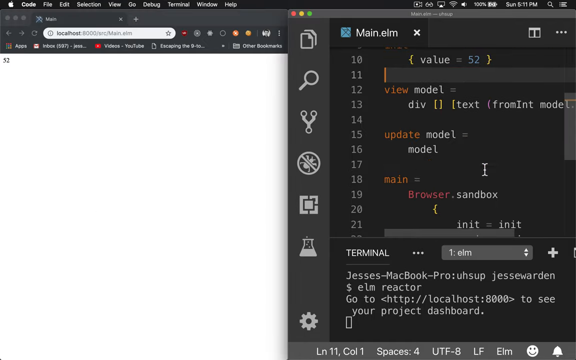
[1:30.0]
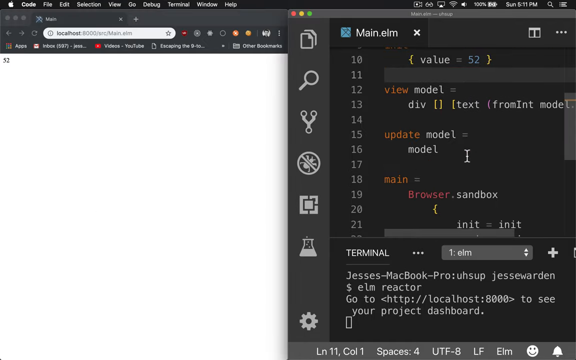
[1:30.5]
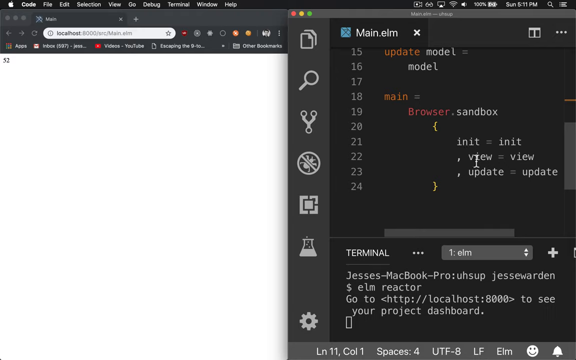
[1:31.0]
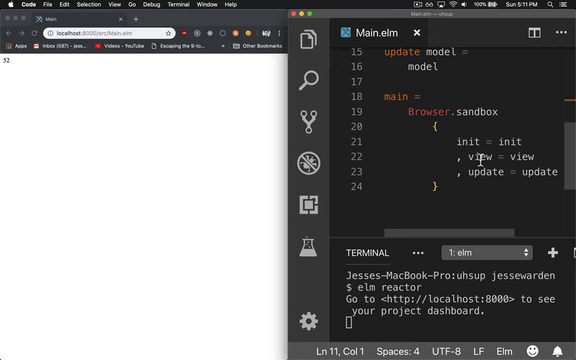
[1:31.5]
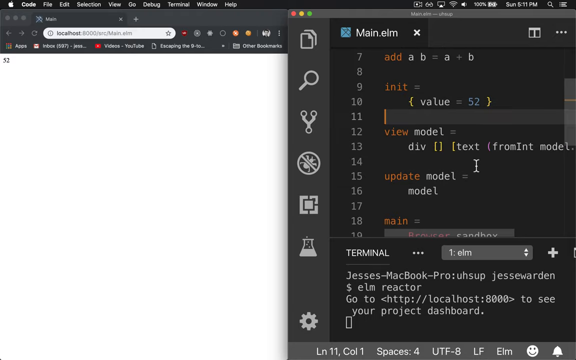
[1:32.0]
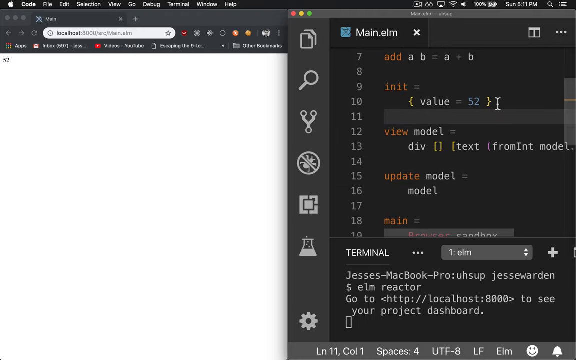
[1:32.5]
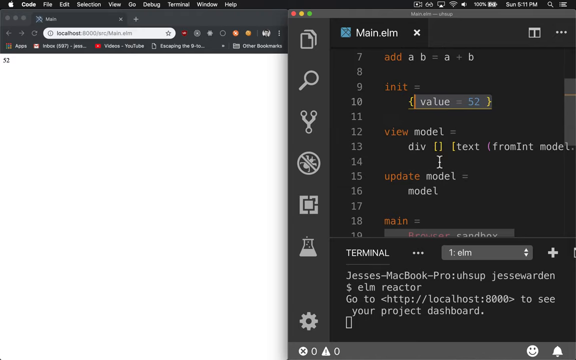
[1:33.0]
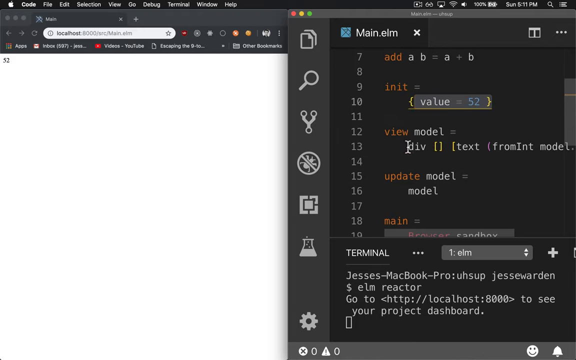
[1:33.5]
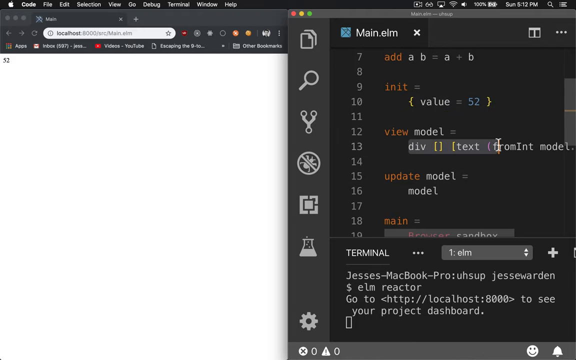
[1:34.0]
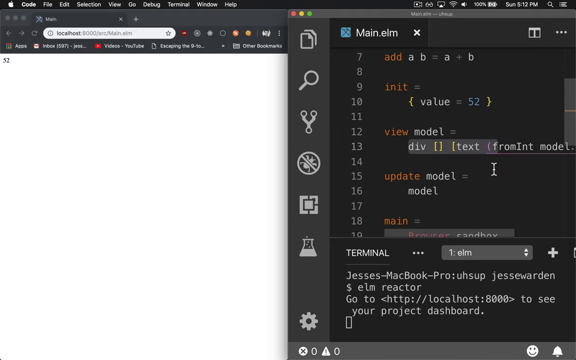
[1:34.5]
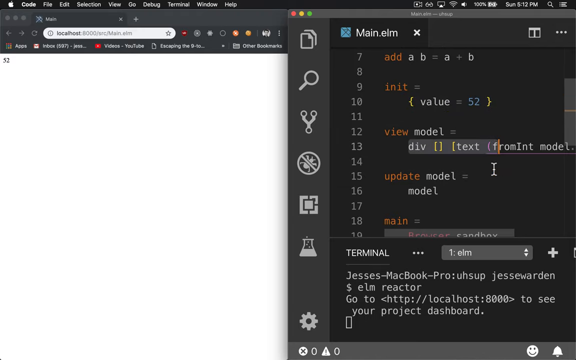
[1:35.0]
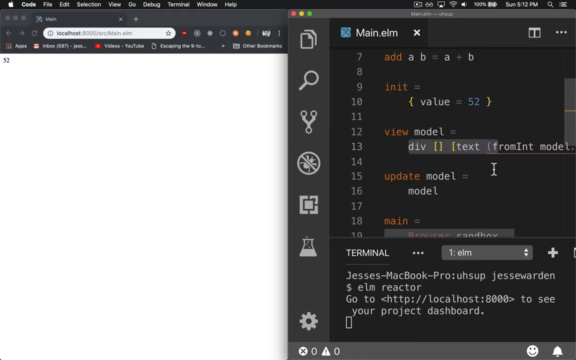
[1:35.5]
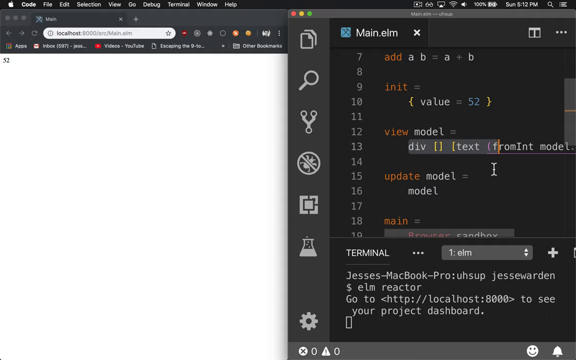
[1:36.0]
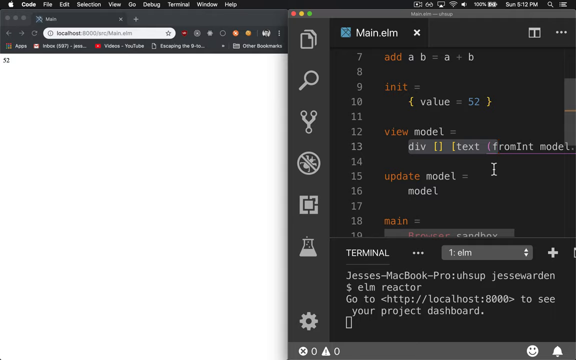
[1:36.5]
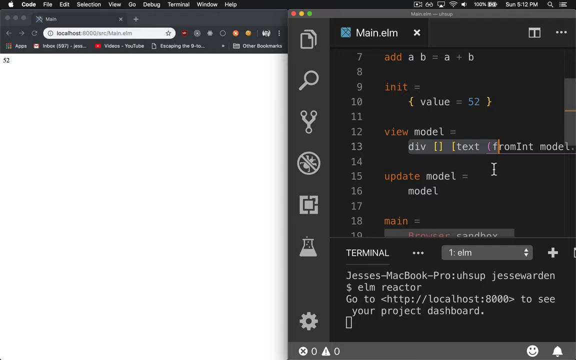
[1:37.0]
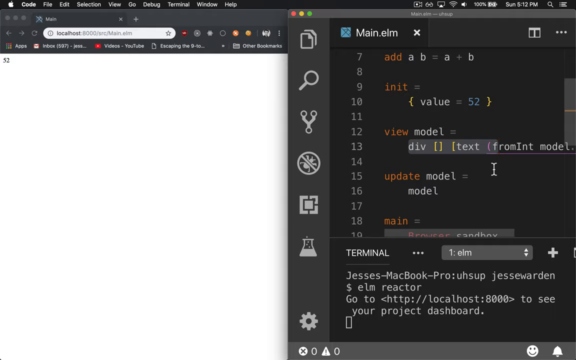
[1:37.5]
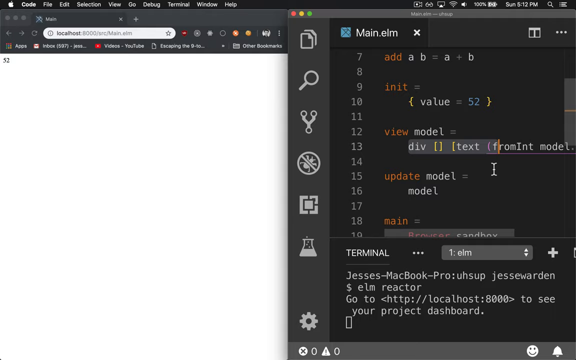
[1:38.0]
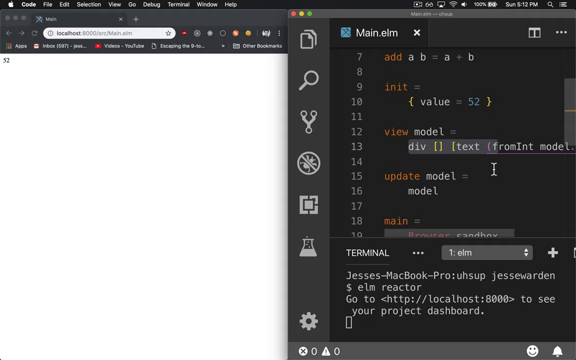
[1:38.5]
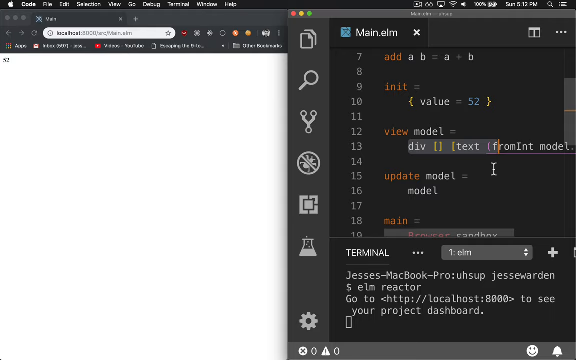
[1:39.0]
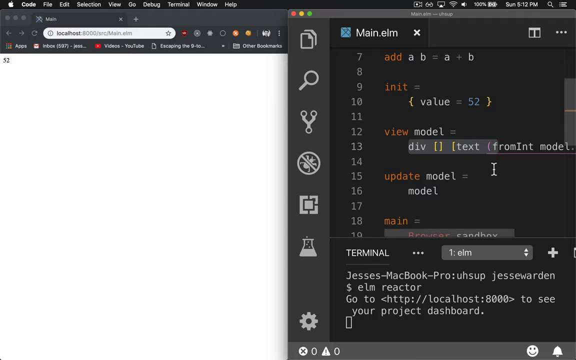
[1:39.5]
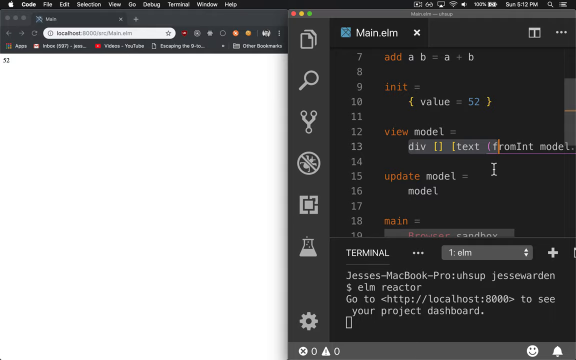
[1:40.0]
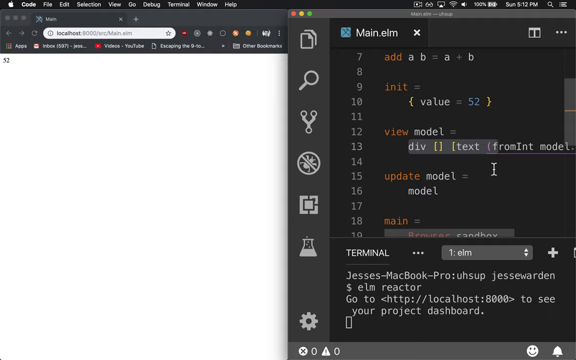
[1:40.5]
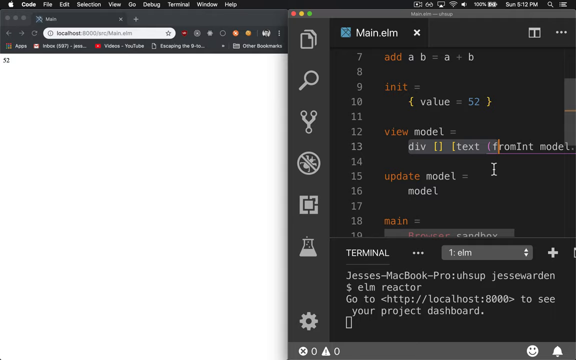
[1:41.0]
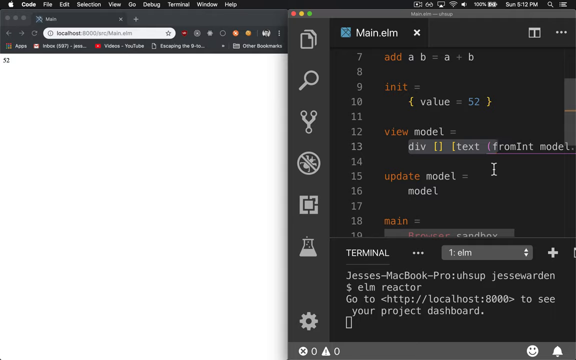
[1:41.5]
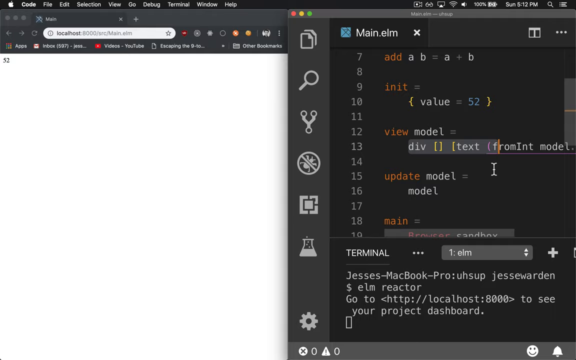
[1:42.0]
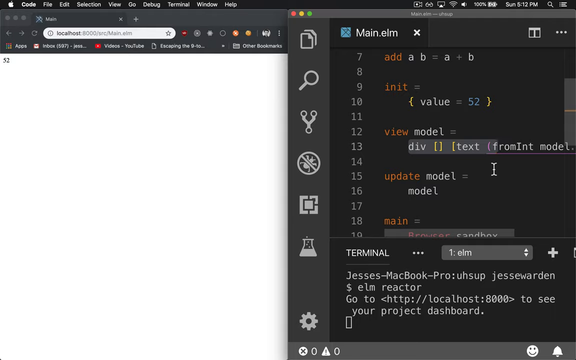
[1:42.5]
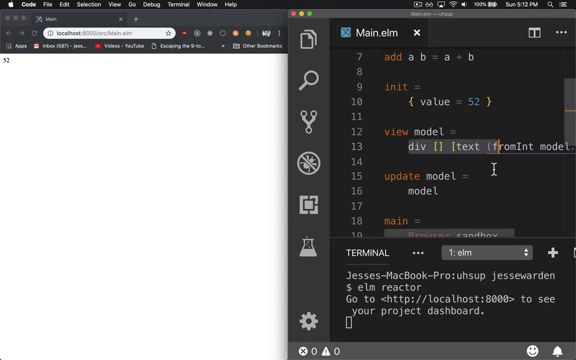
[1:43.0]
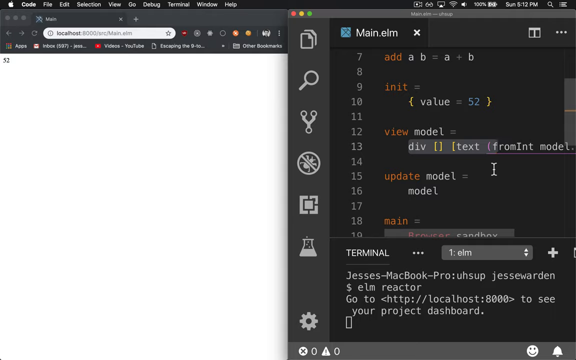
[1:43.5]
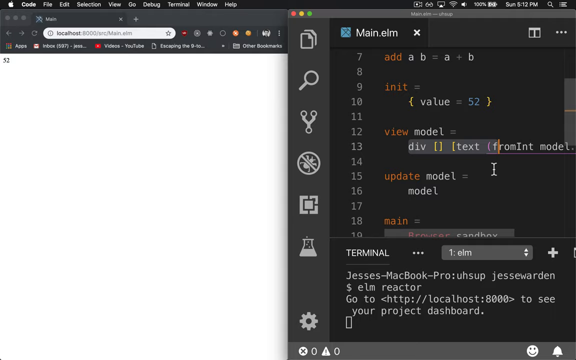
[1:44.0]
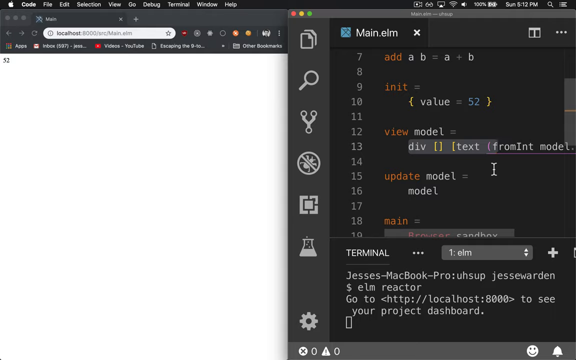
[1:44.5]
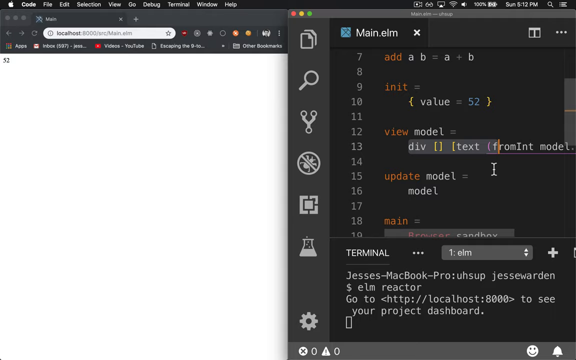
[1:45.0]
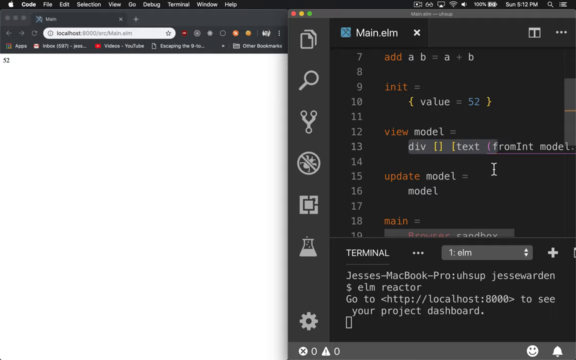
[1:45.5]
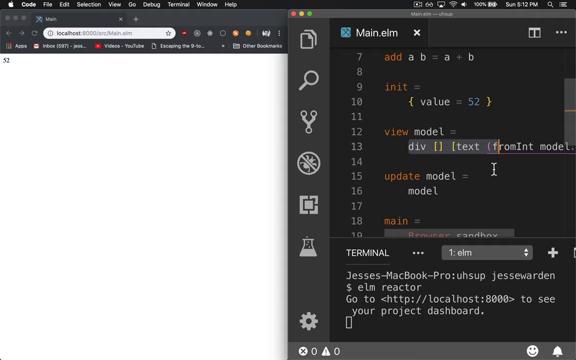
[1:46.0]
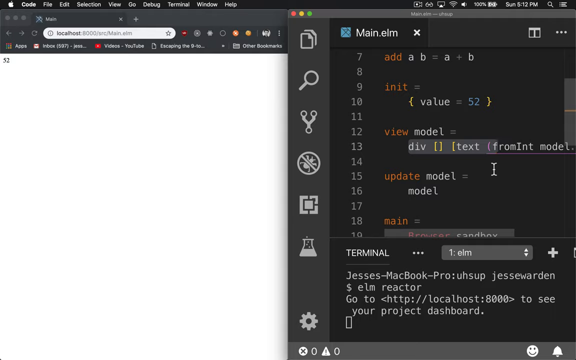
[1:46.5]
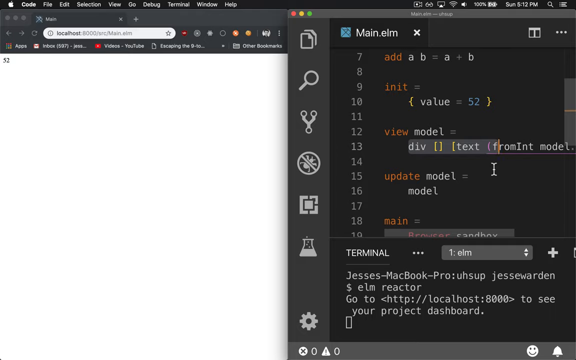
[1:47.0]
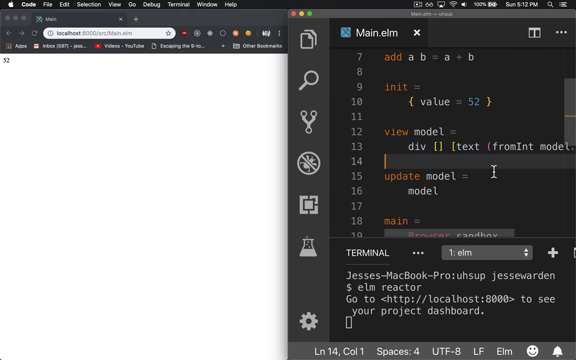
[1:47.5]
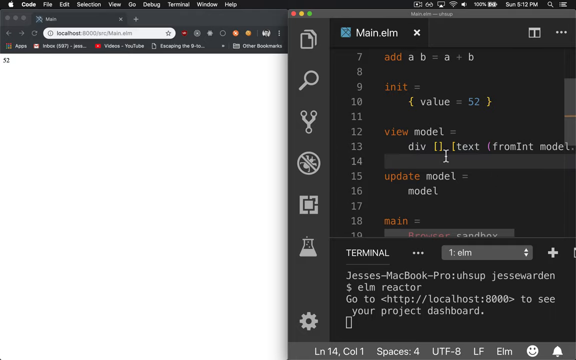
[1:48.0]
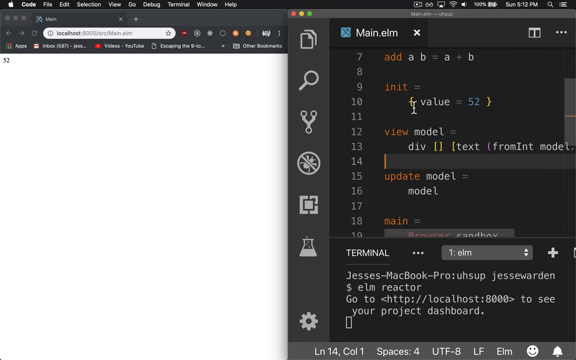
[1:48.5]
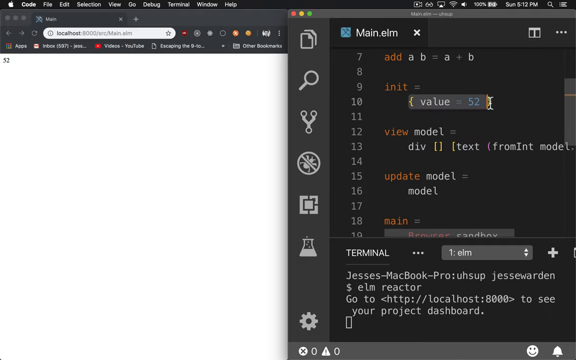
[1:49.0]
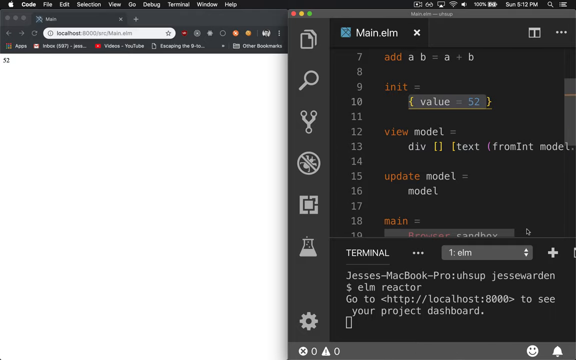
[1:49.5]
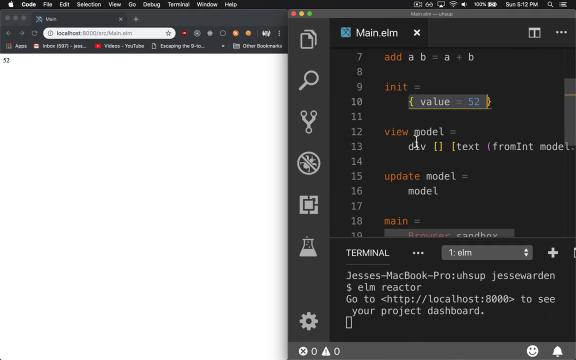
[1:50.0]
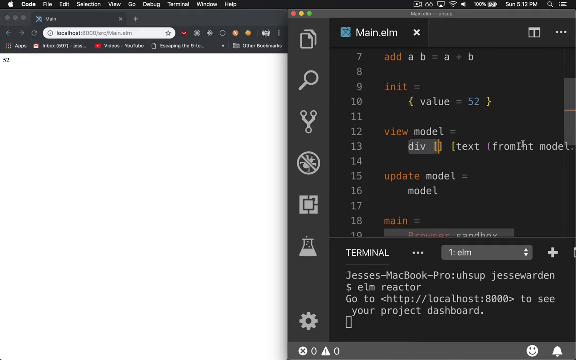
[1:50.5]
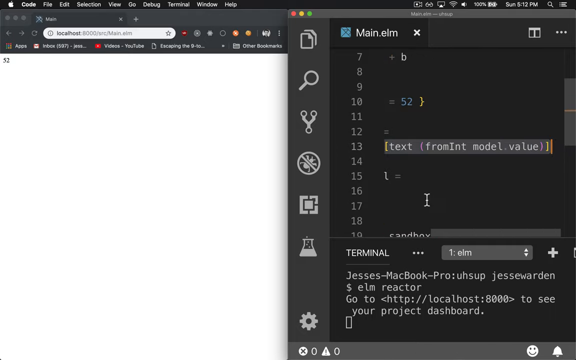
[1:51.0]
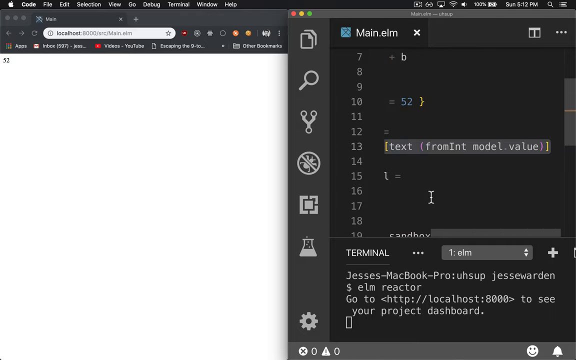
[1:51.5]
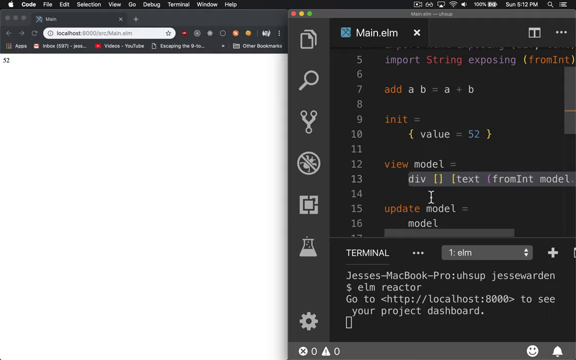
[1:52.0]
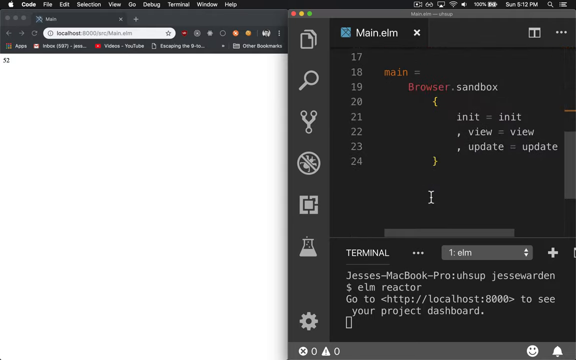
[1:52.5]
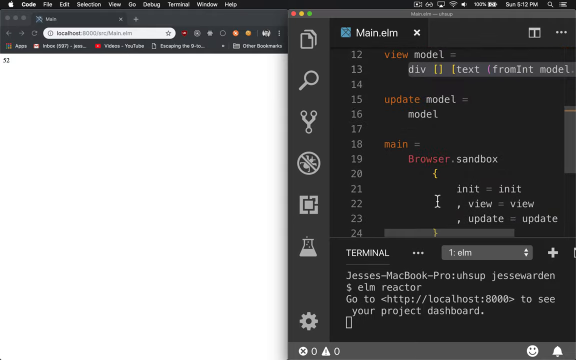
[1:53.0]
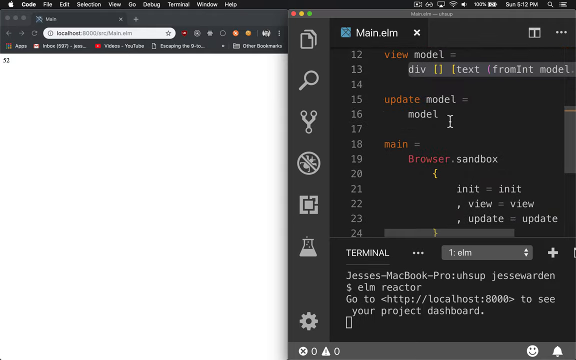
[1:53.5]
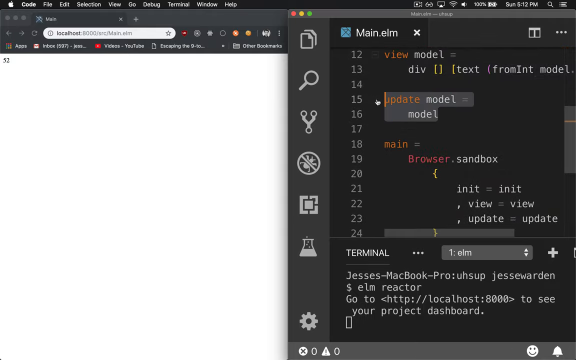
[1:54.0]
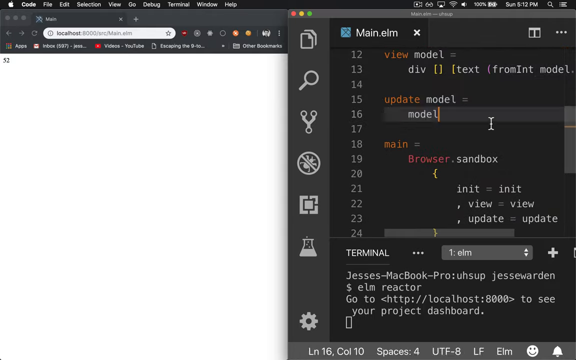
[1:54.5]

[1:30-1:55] The main portion of the model, including browser.sandbox, is shown in a split-screen view, with the web browser showing localhost port 8000 open on the left half of the screen and the IDE on the right half. Inside the model there is a div with the text from model. The person seemingly just hovers over the from model section, then hovers over the model one last time and scrolls down, scrolling around different portions of the IDE or code file before the video ends. No physical subjects, animals or people are shown; the setting is an IDE and a macOS web browser open side by side.